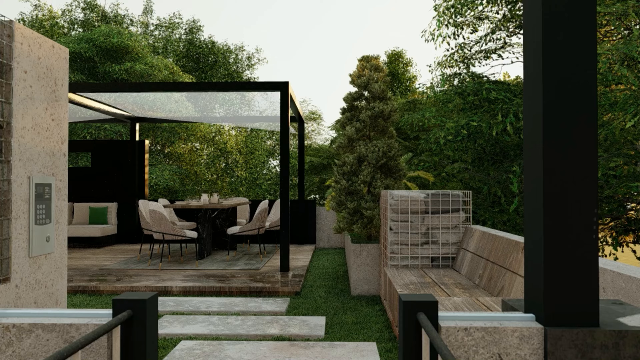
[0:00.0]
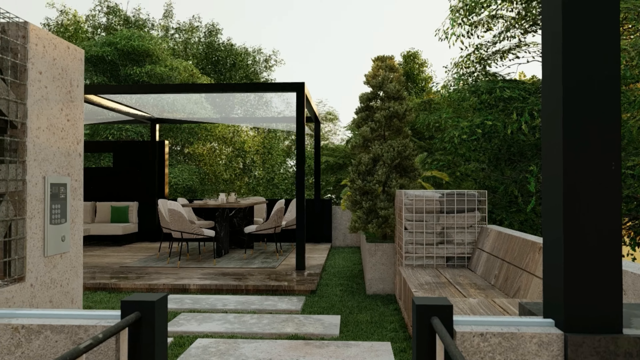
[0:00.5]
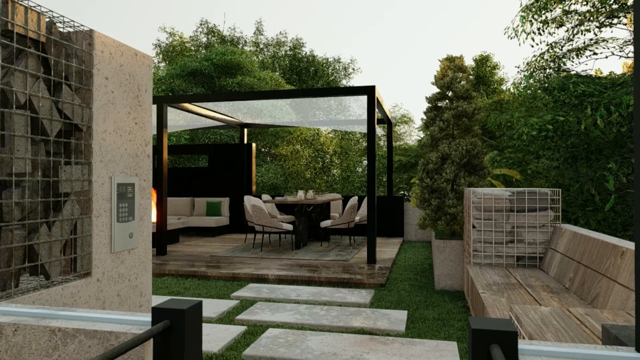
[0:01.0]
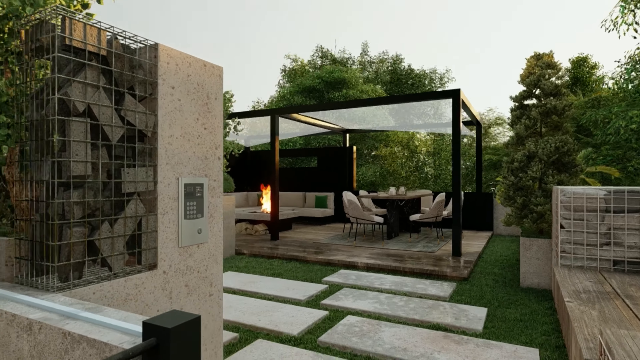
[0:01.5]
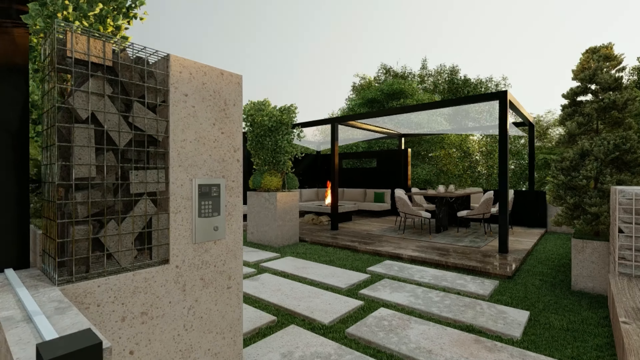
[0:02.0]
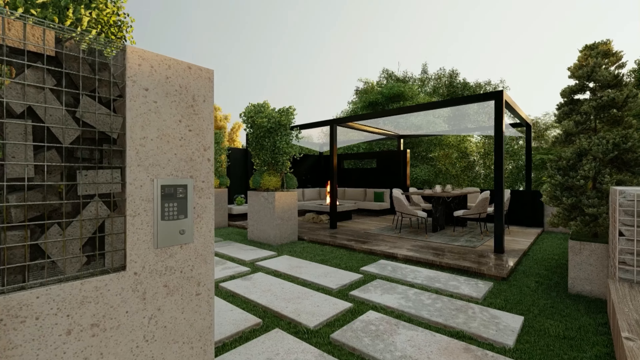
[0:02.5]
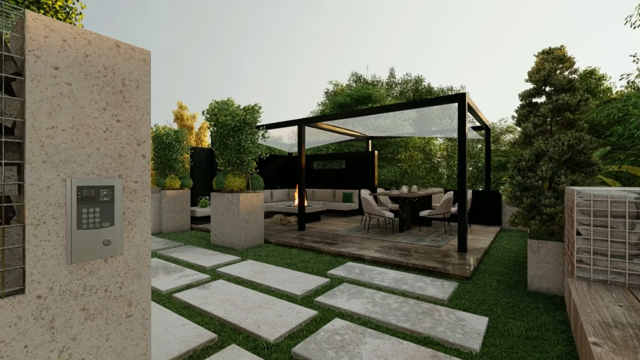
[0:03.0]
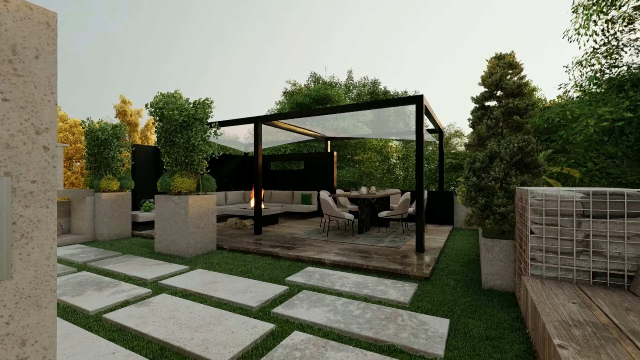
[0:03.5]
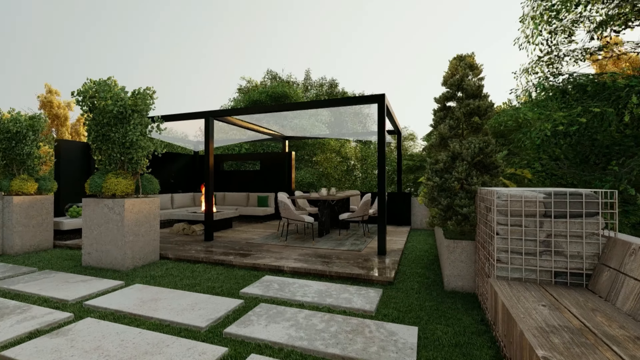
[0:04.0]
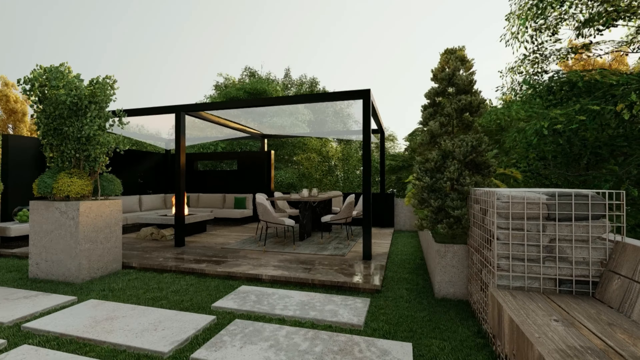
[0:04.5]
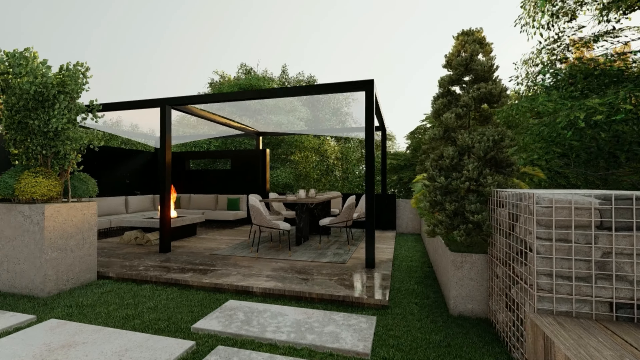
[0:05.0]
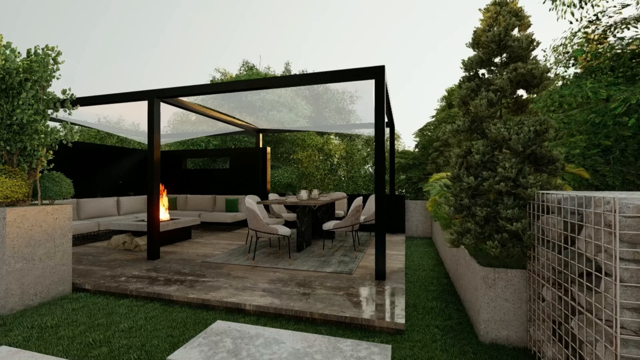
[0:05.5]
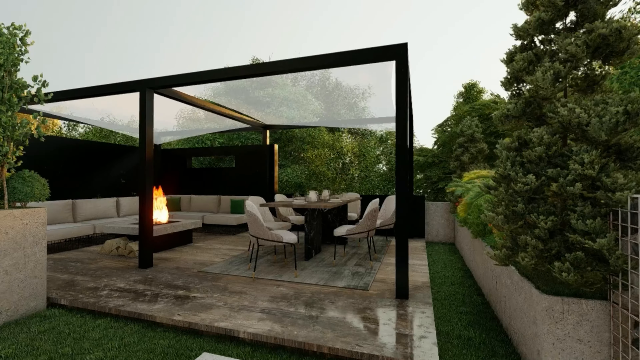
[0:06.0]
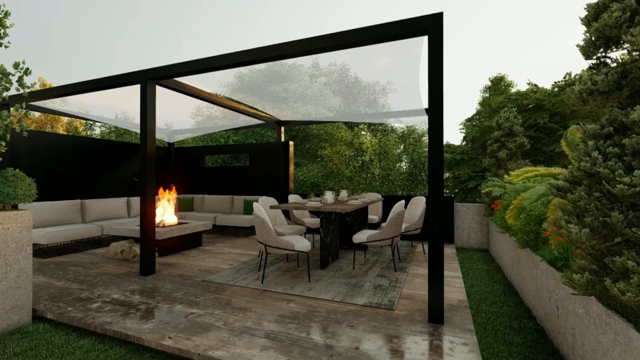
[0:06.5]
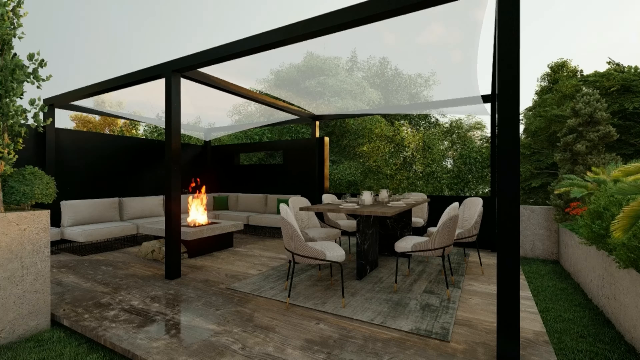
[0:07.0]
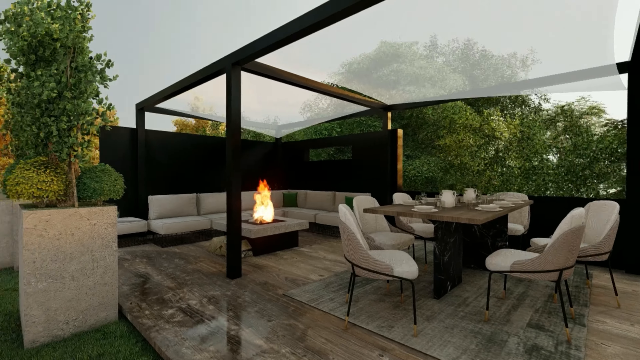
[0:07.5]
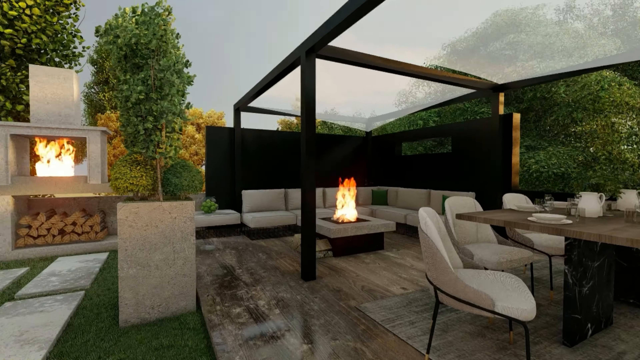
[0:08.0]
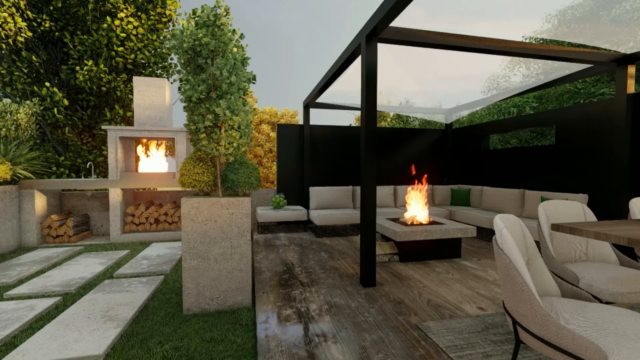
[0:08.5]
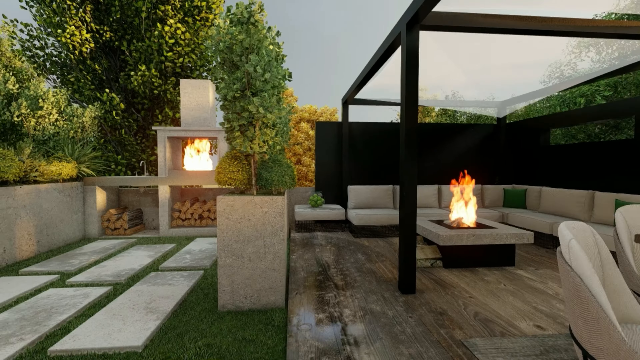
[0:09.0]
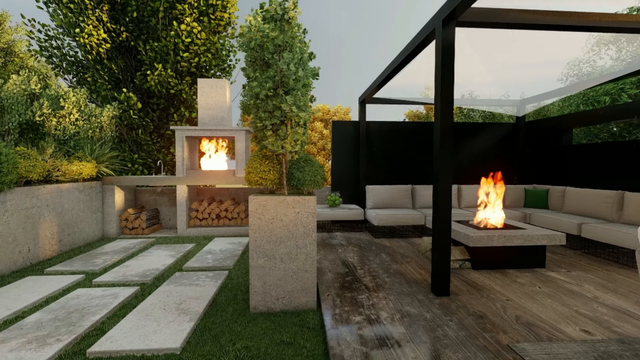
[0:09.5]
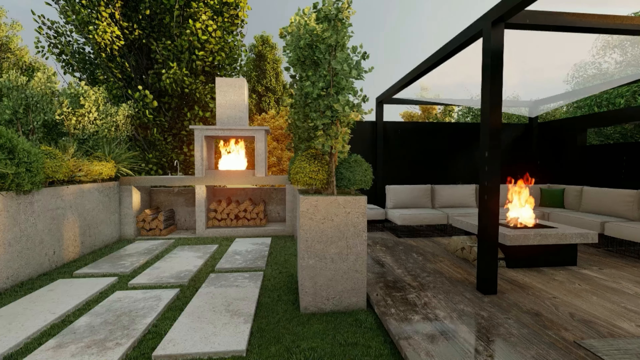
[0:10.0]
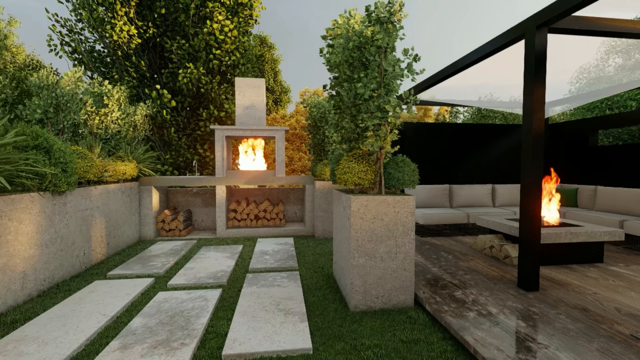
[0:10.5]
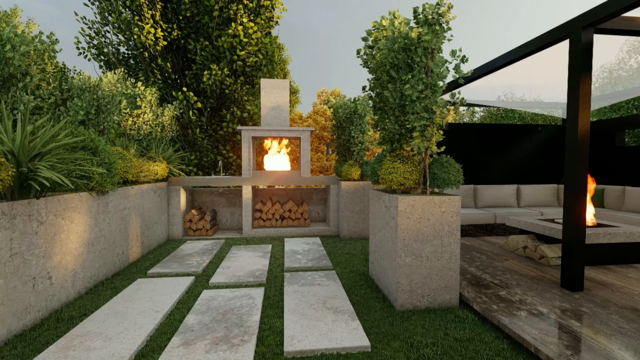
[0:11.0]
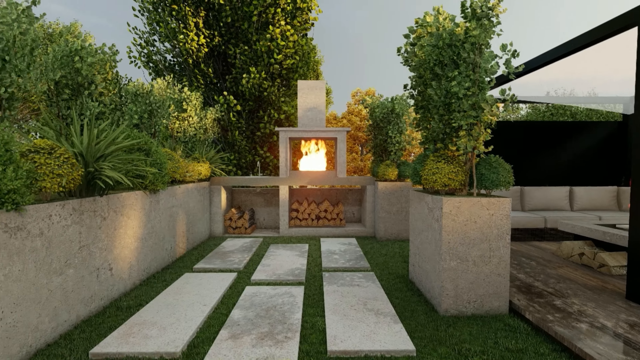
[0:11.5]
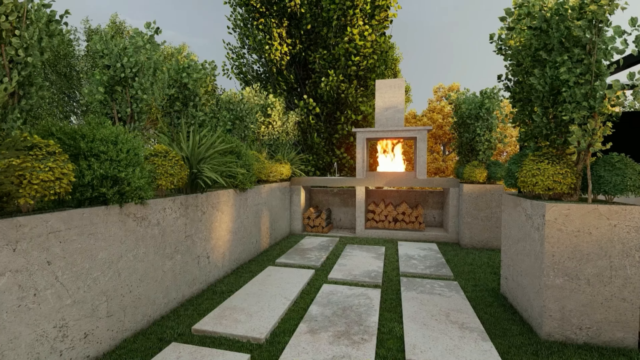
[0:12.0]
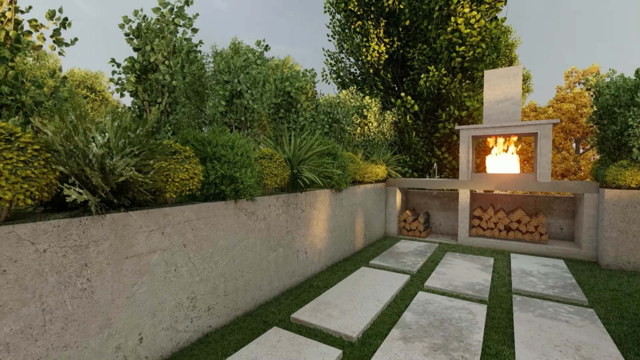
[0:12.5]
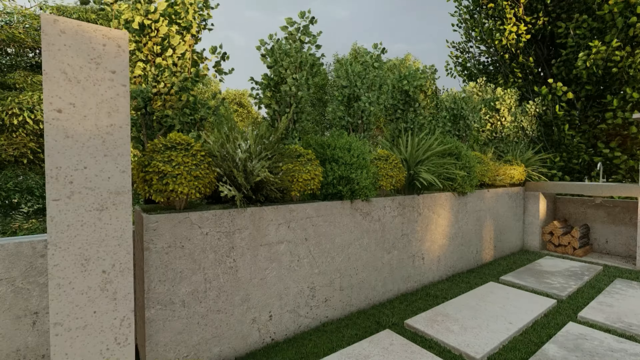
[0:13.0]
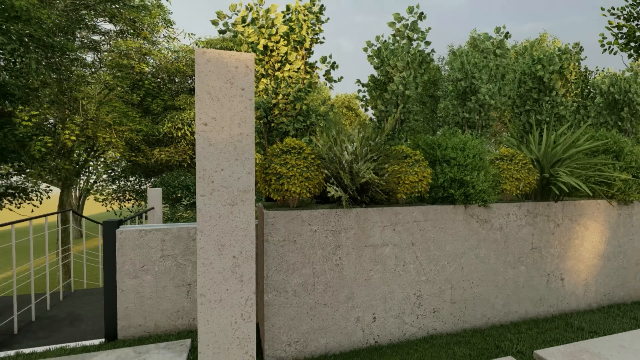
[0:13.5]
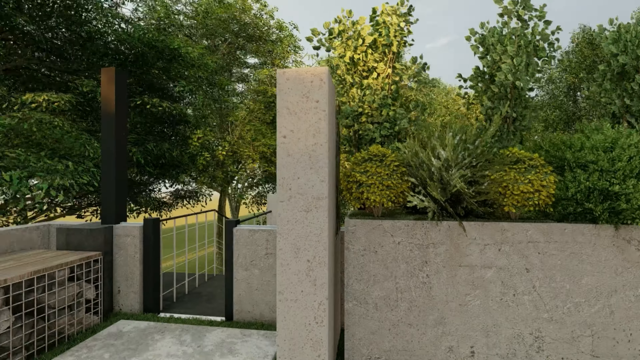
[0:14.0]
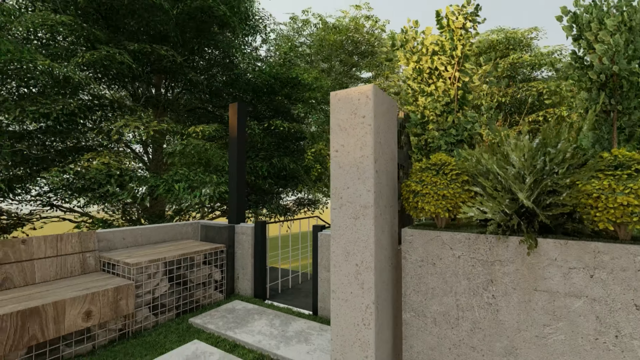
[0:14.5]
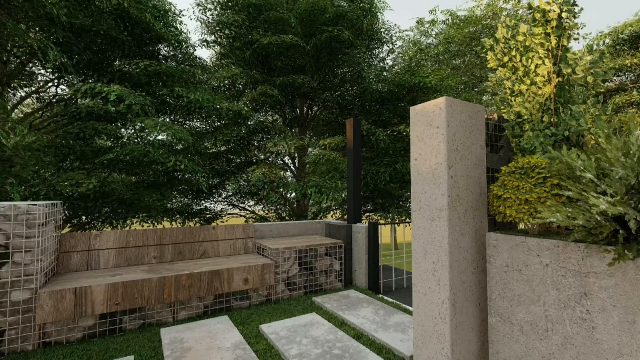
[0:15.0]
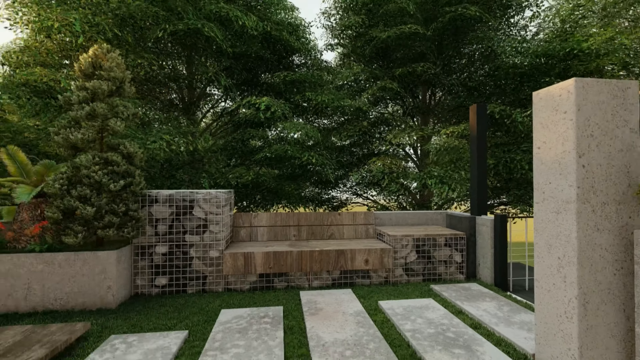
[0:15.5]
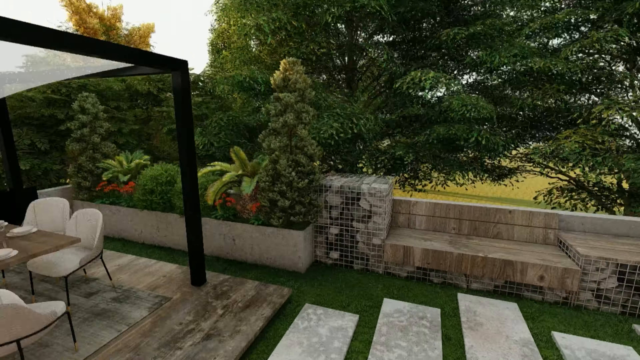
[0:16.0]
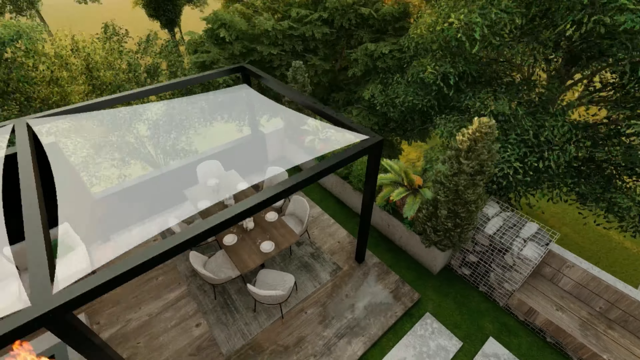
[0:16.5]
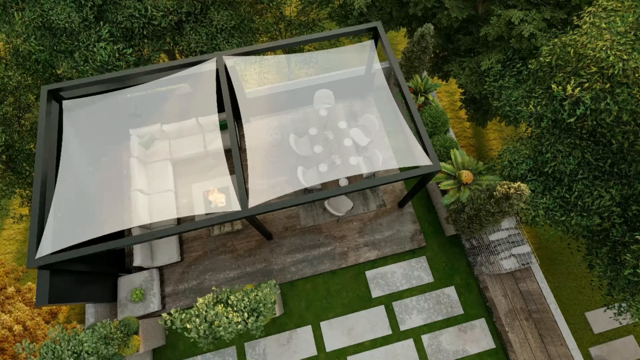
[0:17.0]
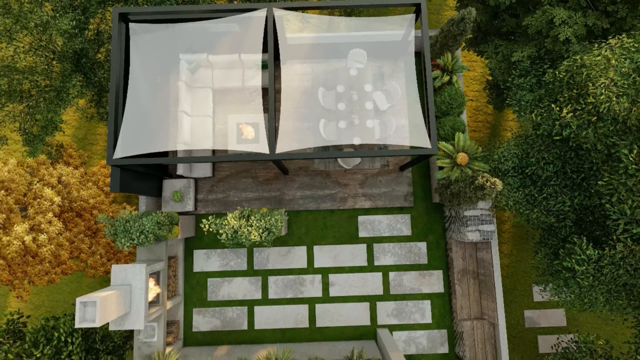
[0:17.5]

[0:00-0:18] The setting is a very relaxed outdoor space with a beautiful seating area that has a table and some chairs. There is also a fire pit and a sofa for lounging underneath a covered, patio-type area. There are pillows, which look like lounge chair pillows, inside a kind of fenced area. Over on the left there appears to be another kind of storage container that looks almost brick-like. There are some very big cement plant holders with very large plants coming out of them; one of the plants looks almost like a tree, and the other plants look like shrubs and bushes. It is a very clear day. More than one fire is going: there is a fire pit in the center by the relaxing couches, and there is a stand with firewood storage below it and a fire going above it. The fire and the stand area are surrounded by trees and shrubbery, and there are some cement pathway markers on the cement near that fire stand. The camera then zooms around to show the setup, the seating area and the surrounding plants. It then goes to an aerial view that shows what looks almost like a clear netting covering shading the table area.